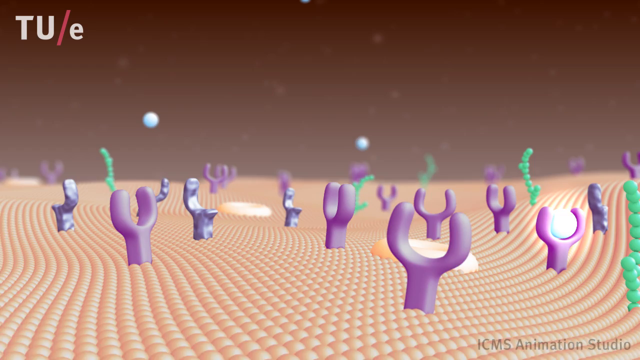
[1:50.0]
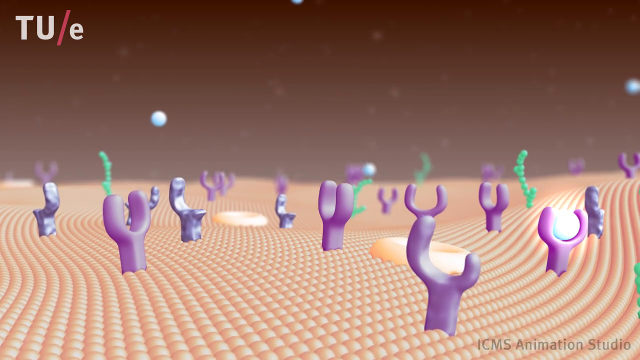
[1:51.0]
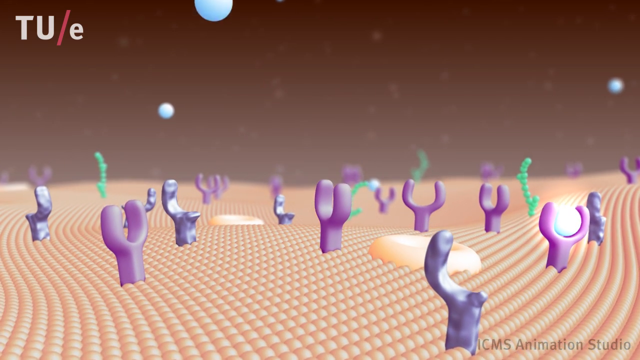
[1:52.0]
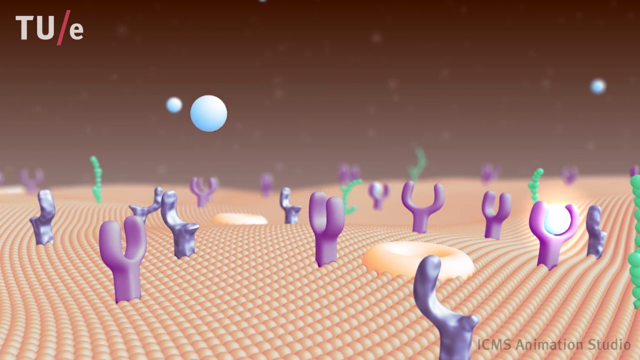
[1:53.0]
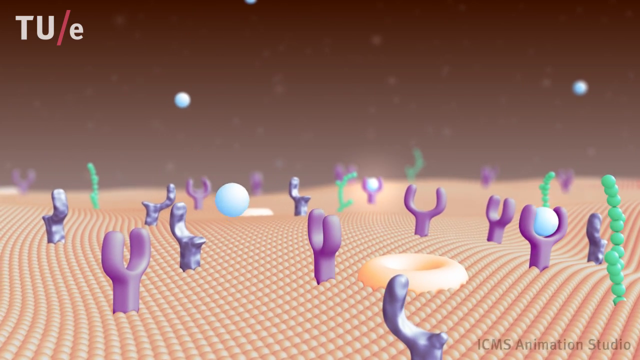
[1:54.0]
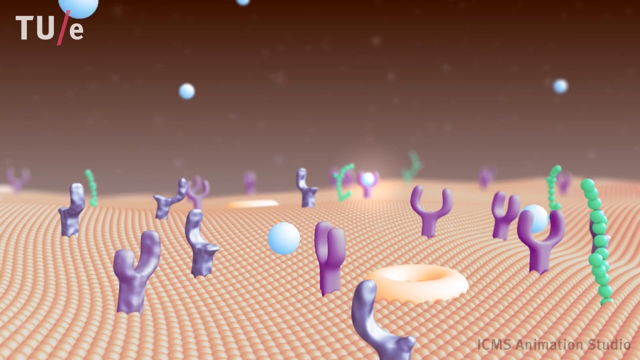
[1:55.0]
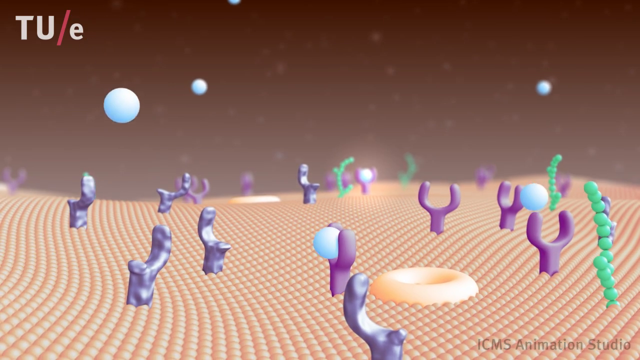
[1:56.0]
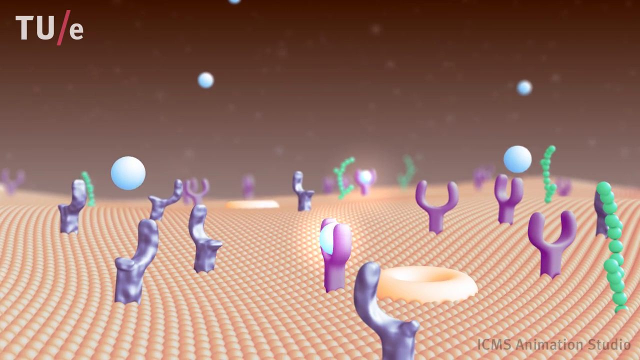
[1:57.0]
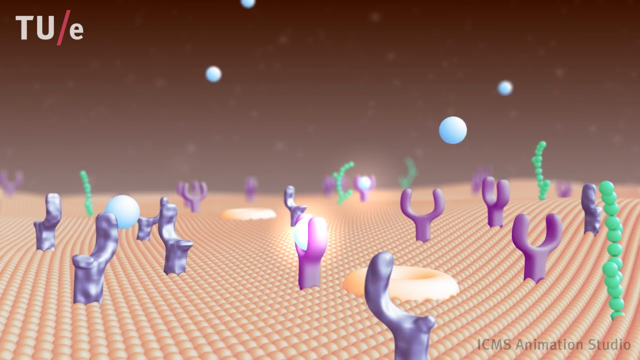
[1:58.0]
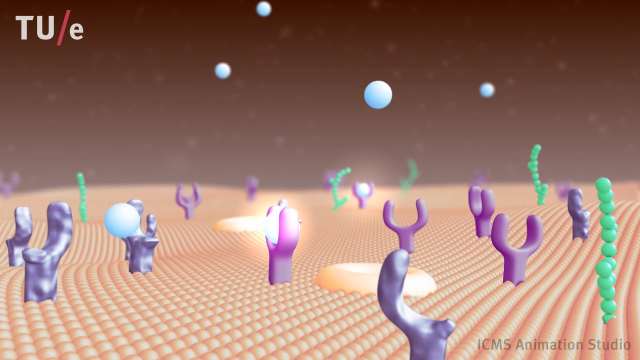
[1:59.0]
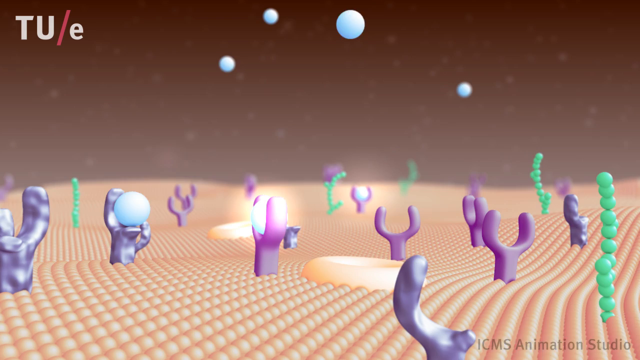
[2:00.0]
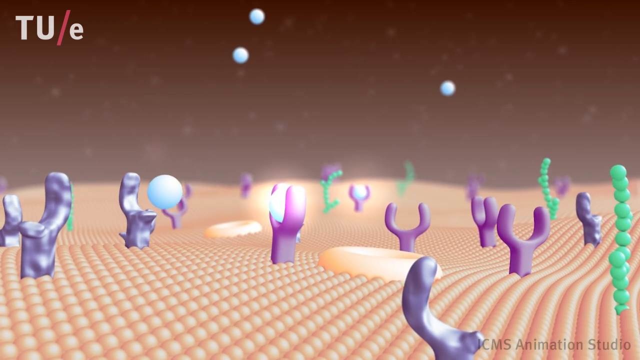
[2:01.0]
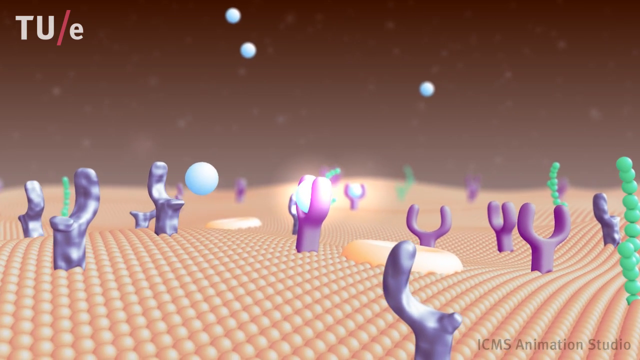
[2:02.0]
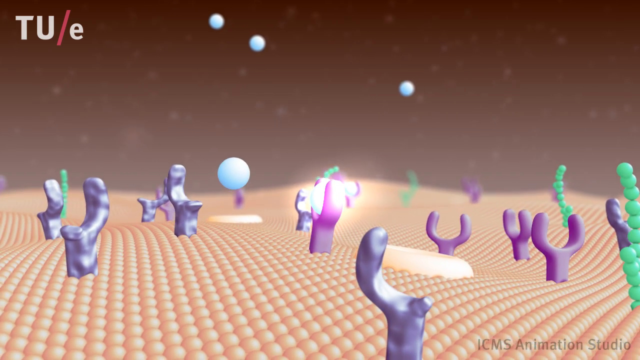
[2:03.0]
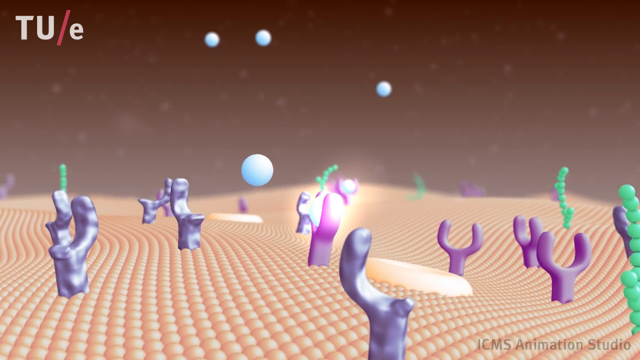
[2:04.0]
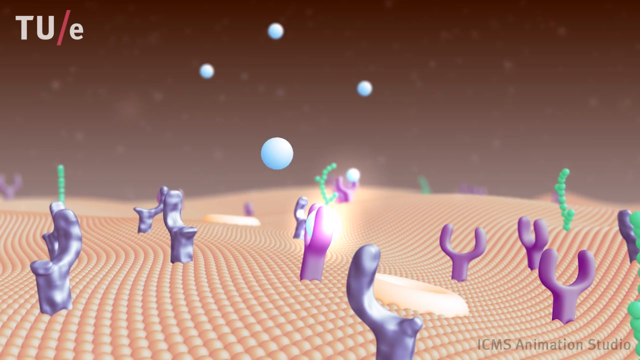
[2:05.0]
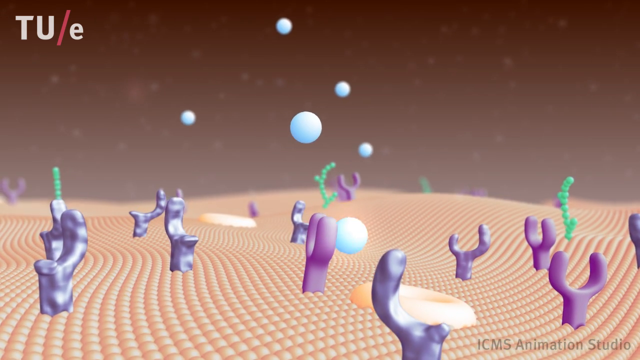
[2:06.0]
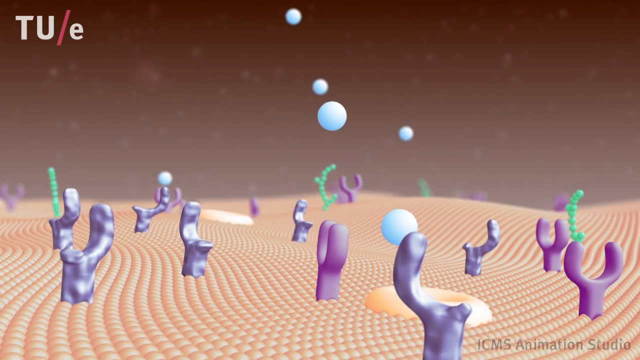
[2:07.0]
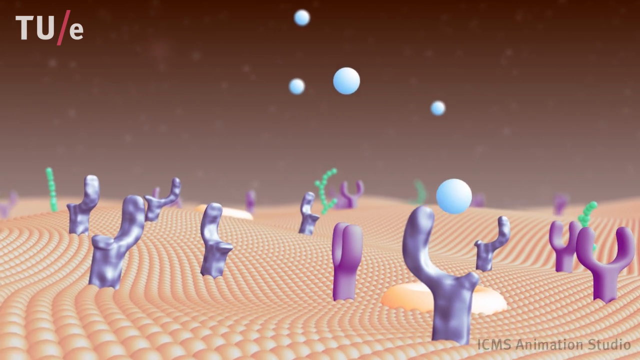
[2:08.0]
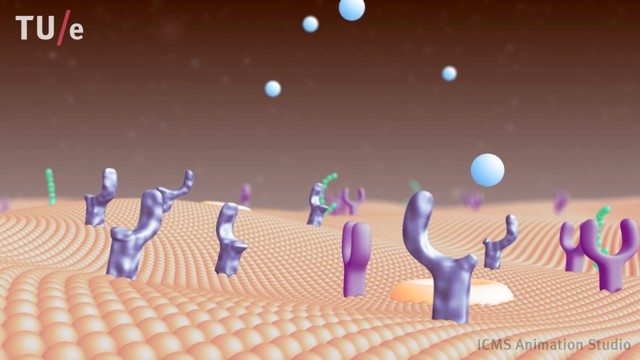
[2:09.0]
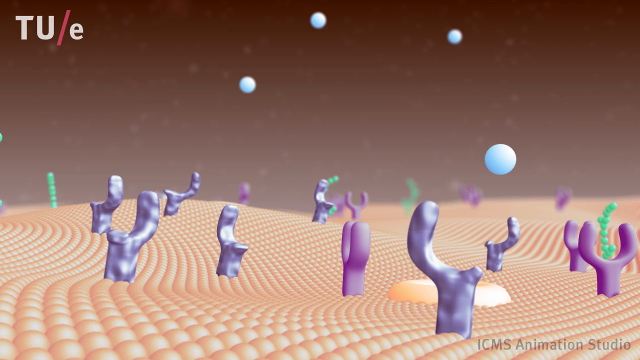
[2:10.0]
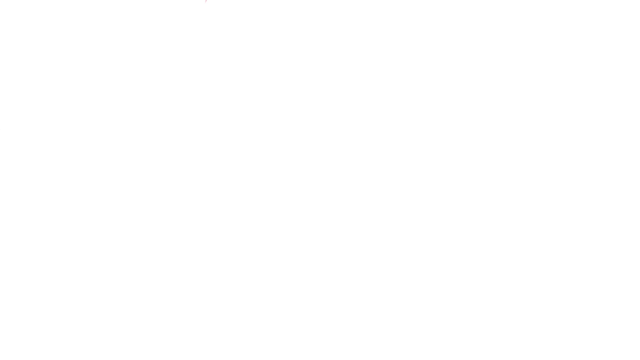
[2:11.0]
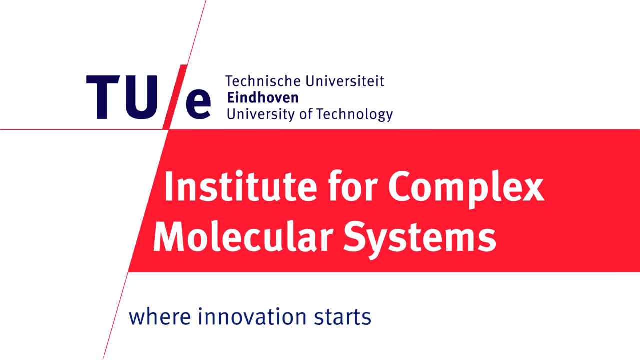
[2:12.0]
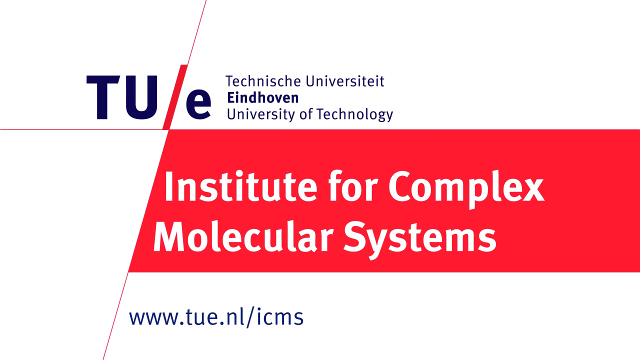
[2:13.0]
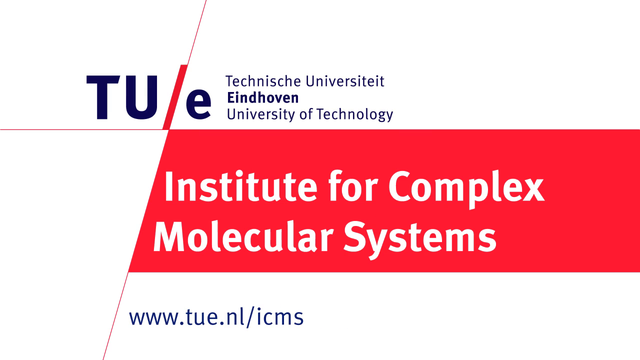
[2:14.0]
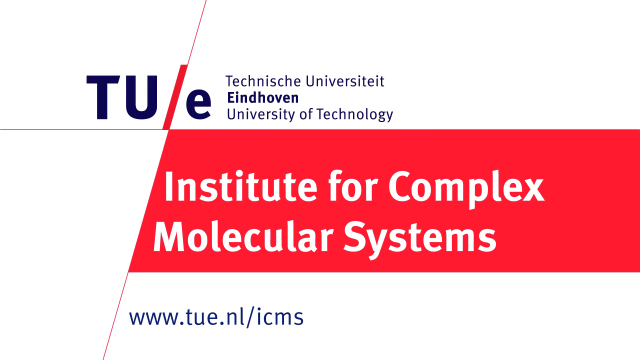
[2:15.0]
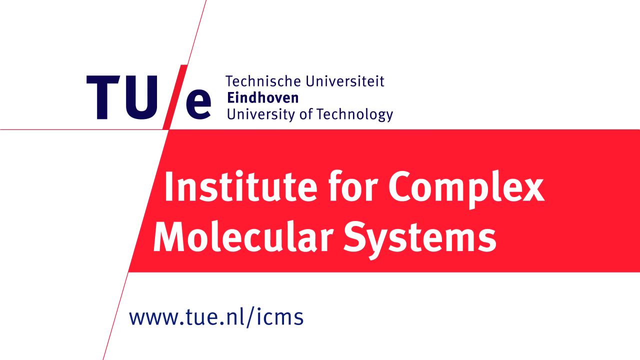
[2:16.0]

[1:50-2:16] An animation shows lots of purple forms that look like a capital letter "Y" with curved branches, along with some gray ones that look like one of the branches is broken. They seem to be resting on a bed of small peach-colored balls. There are also what look like silver balls floating, and green strands. All the elements move around, gently swaying and rotating. There are four silver balls, which then increase to six and float away. The video ends with a graphic in white and red reading "Institute for Complex Molecular Systems" and "Thank you", with the website "www.tue.nl/ICMS" below it. At the very top, on the white part, it reads "Technische Universiteit Eindhoven, University of Technology".